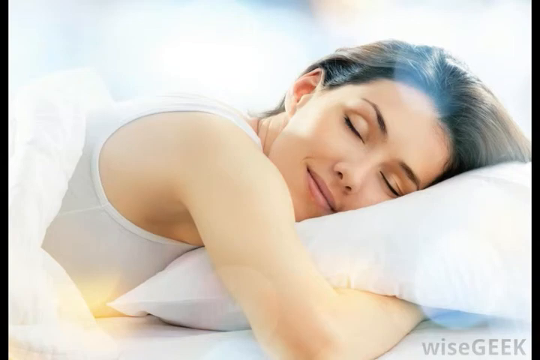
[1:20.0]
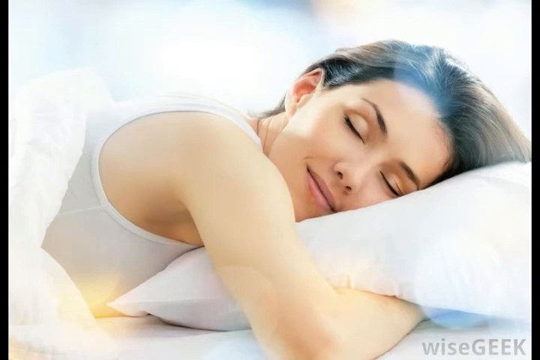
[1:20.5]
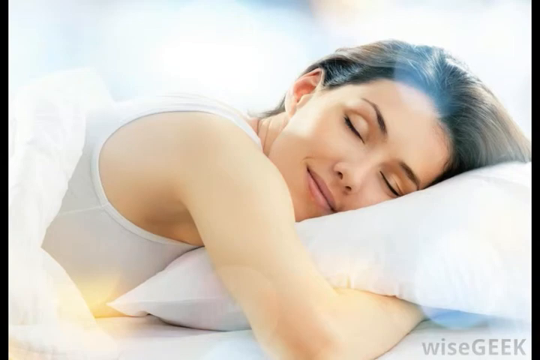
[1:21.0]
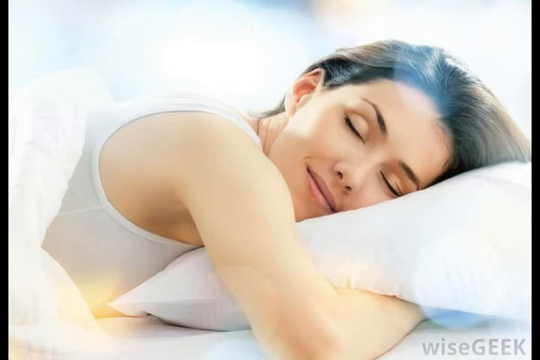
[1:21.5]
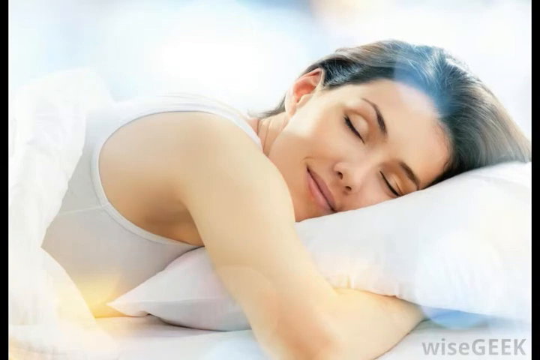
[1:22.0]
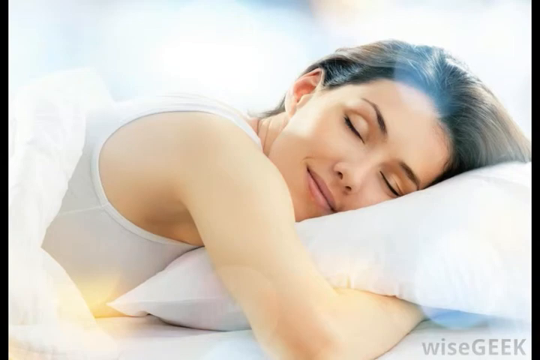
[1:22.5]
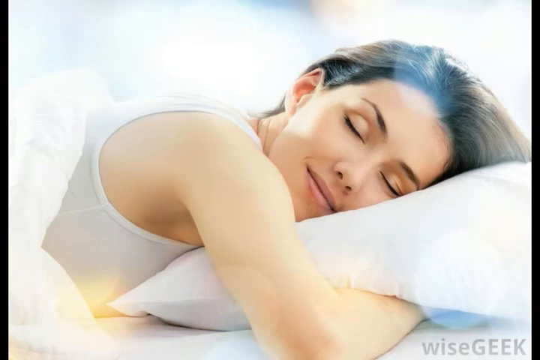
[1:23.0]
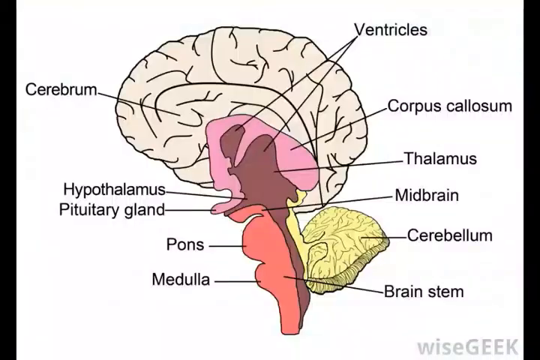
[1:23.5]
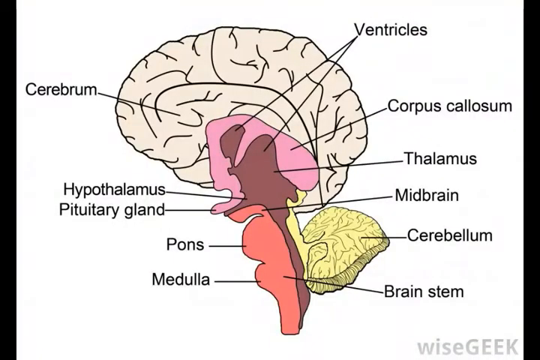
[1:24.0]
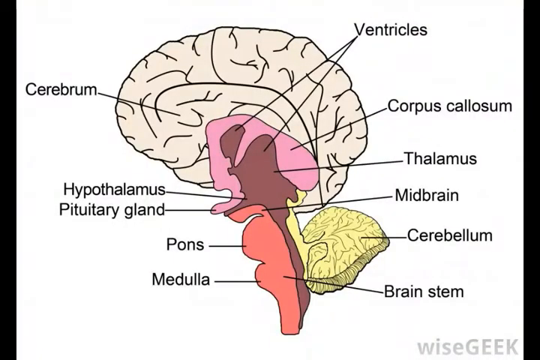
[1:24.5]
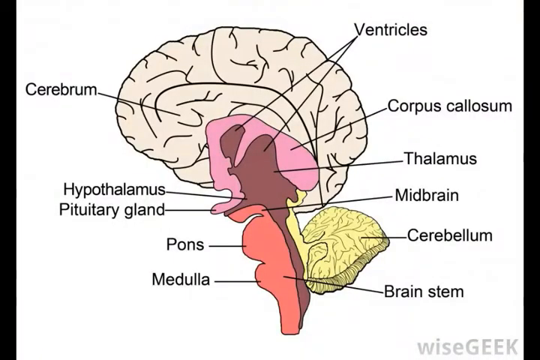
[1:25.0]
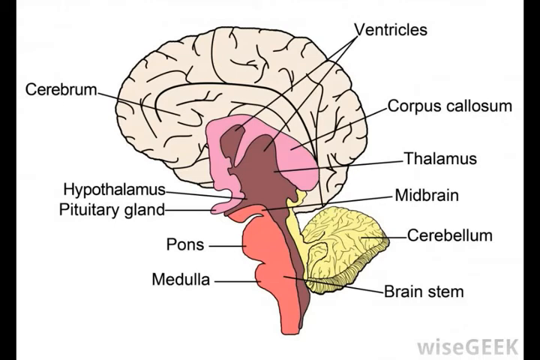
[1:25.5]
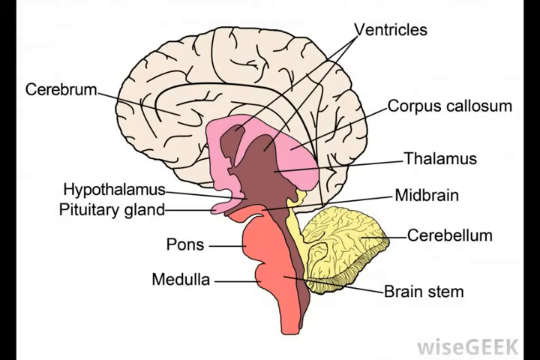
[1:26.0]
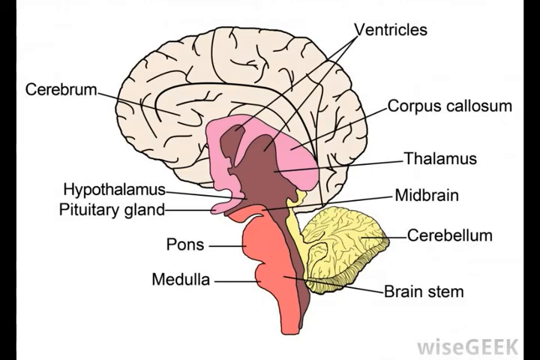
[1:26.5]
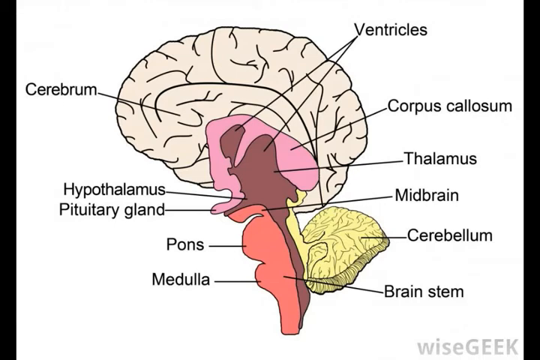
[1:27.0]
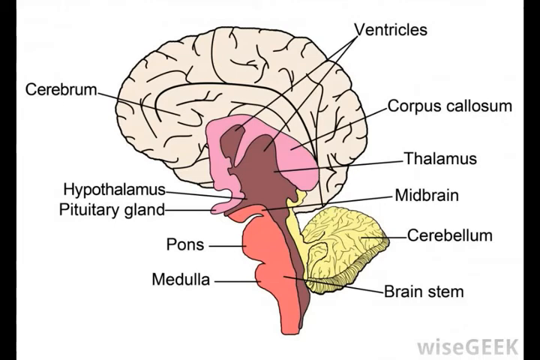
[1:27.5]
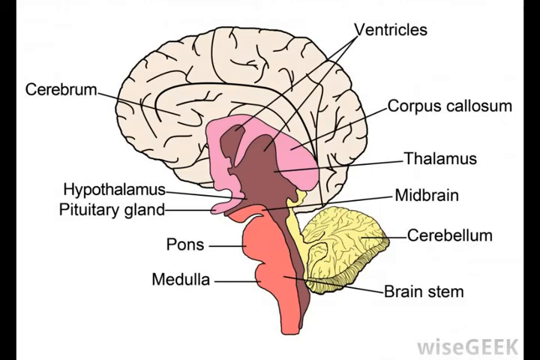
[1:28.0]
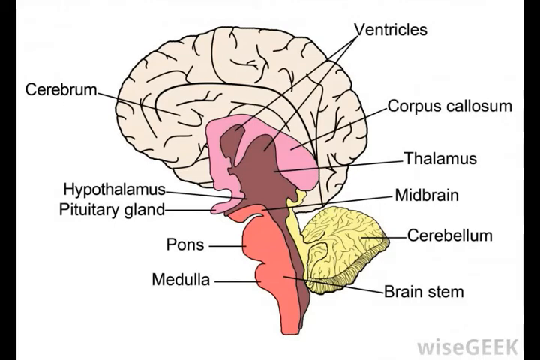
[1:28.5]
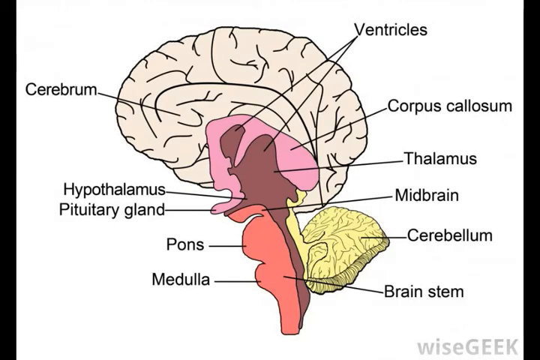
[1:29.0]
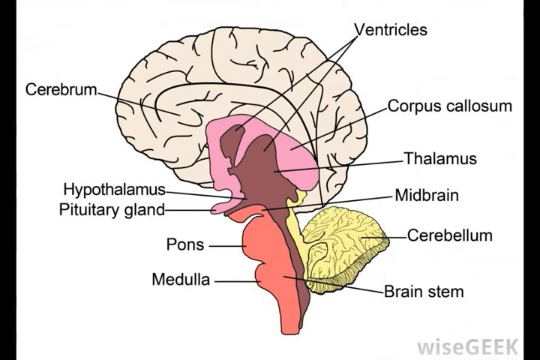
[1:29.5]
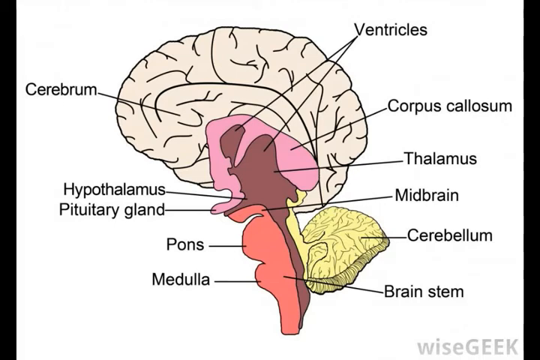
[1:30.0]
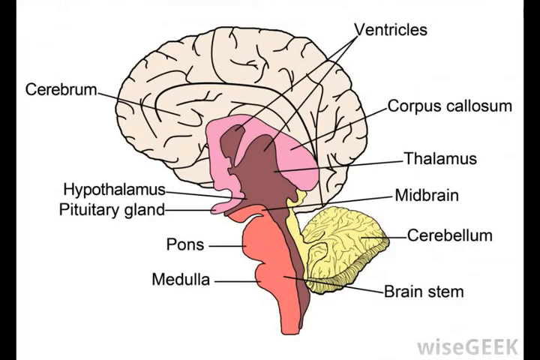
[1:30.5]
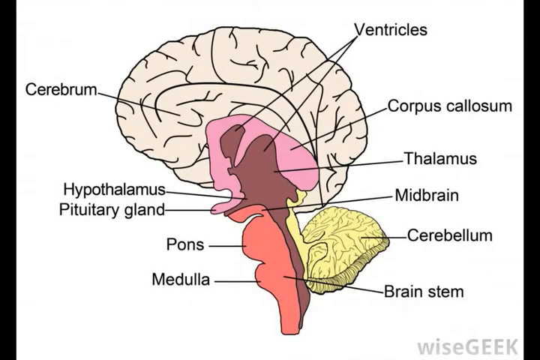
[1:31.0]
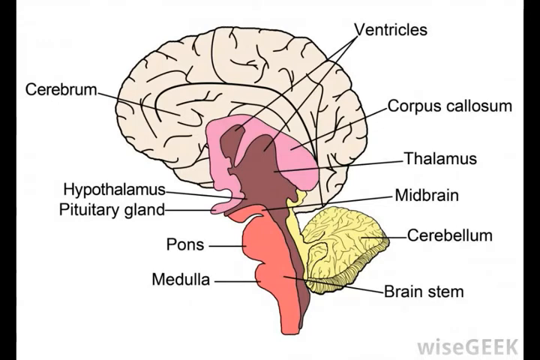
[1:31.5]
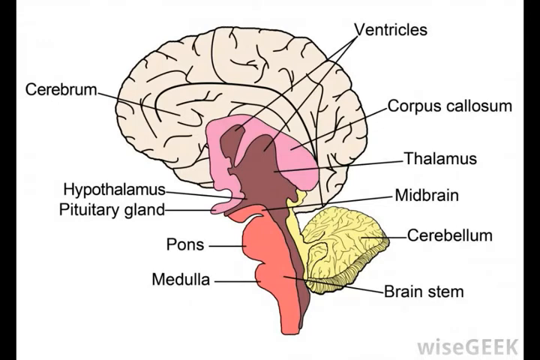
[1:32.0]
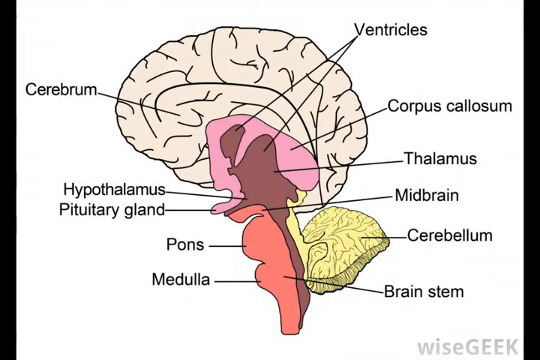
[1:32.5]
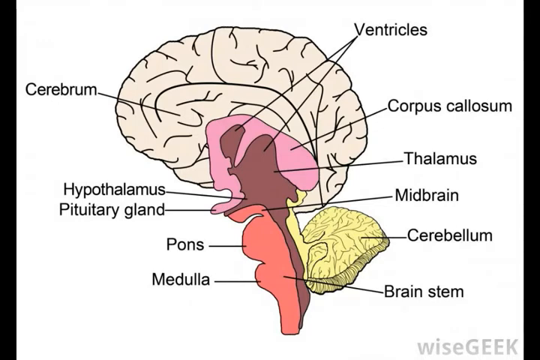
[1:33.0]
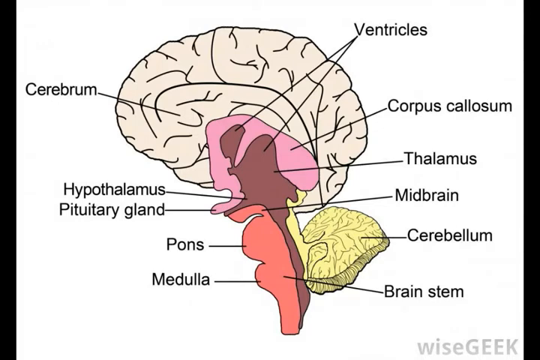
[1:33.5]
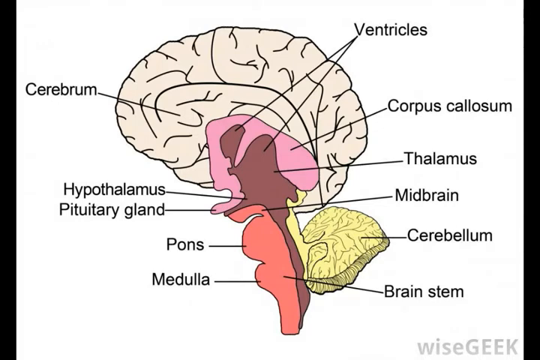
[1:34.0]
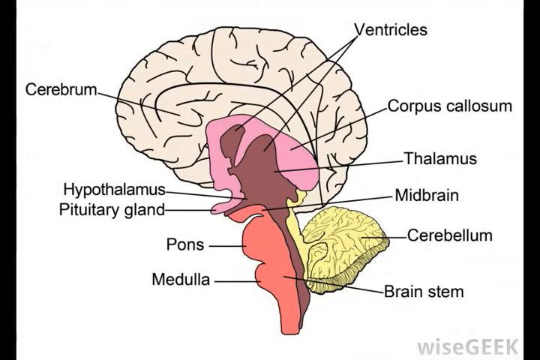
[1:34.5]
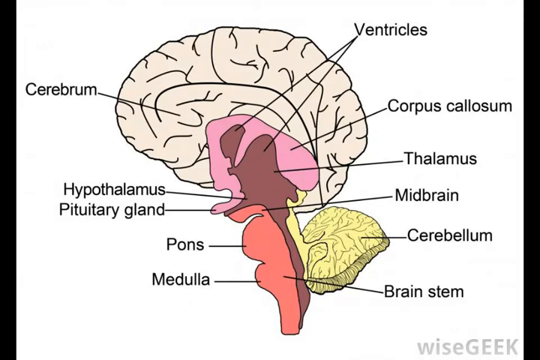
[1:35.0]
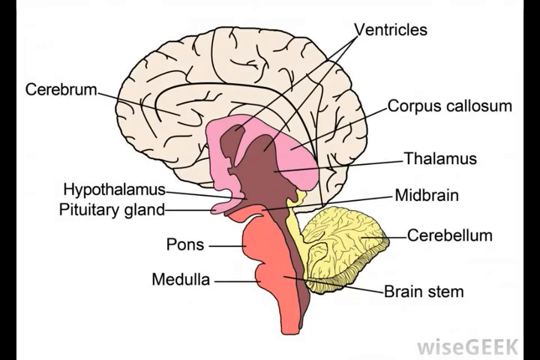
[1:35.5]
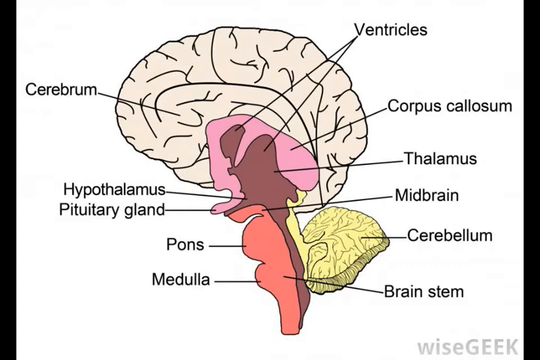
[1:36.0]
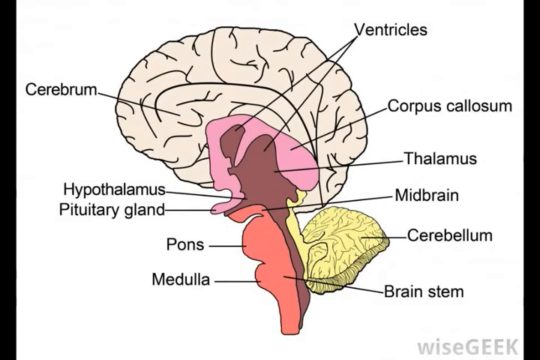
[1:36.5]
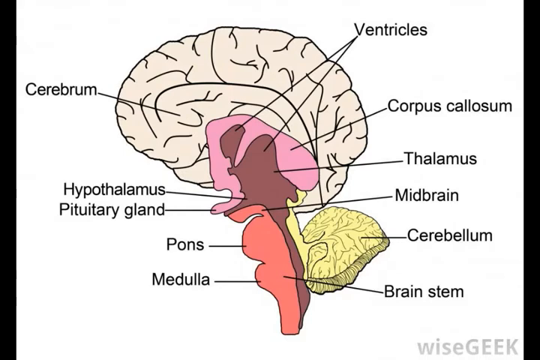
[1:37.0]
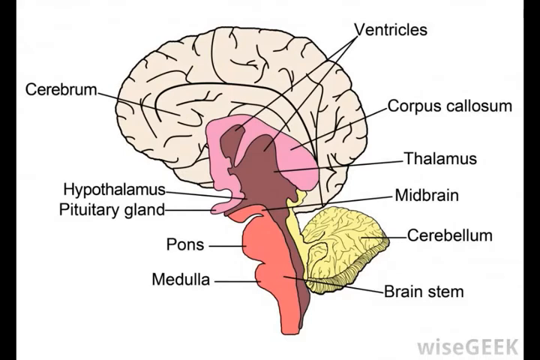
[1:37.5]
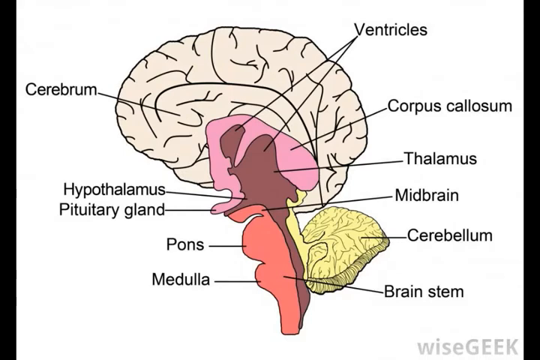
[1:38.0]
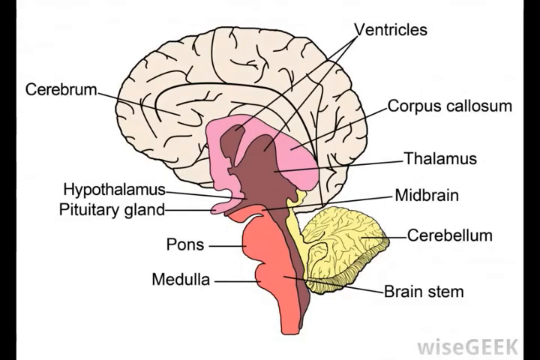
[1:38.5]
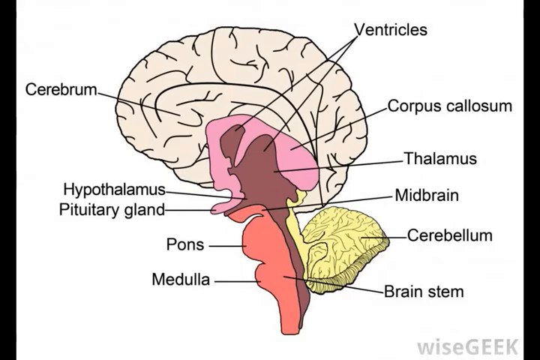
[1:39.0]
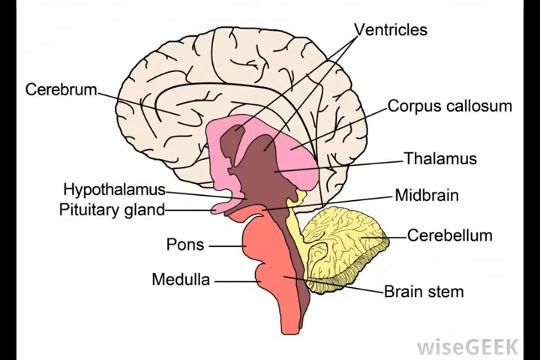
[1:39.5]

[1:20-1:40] The same young woman, in her early to mid 20s, has brown hair and rests on a pillow, her arm hugging a pillow in the foreground. She wears a white tank top and lies in what appears to be a bed, with a duvet coming to just below her shoulders, soft lighting in the background and a very relaxed expression. After about five seconds, a still of a drawn diagram of the human brain appears, showing various regions including the brain stem, the cerebellum and the midbrain. The drawing style is very plain, practically line art, with single colors for different areas: the main brain matter is cream colored, the ventricles and thalamus are darker, more pinkish colors, the cerebellum is more yellow, and the medulla is a kind of salmon pink.